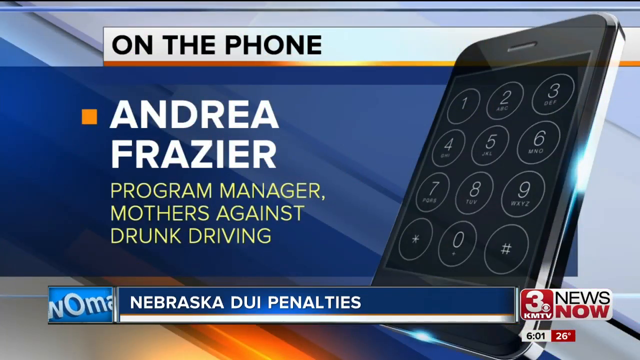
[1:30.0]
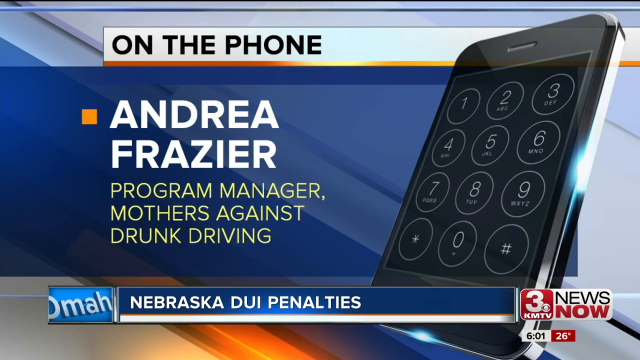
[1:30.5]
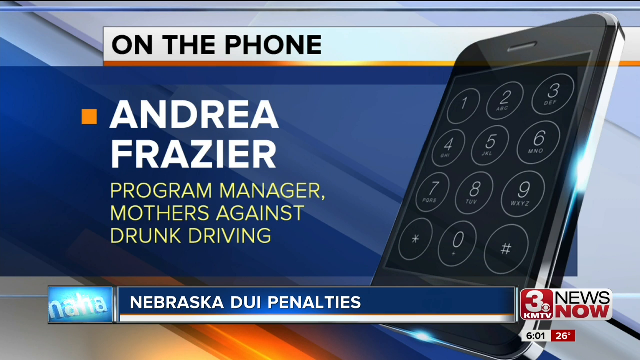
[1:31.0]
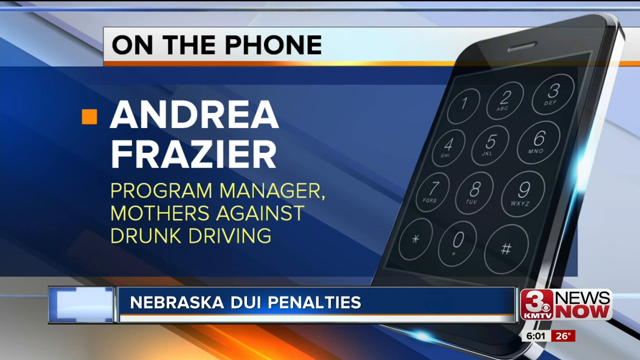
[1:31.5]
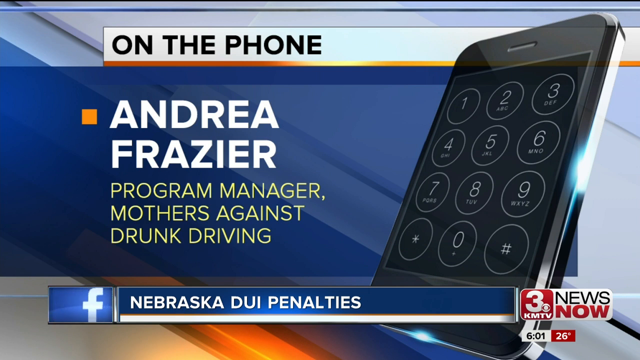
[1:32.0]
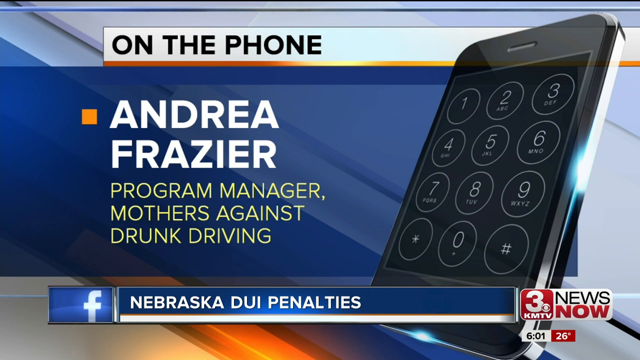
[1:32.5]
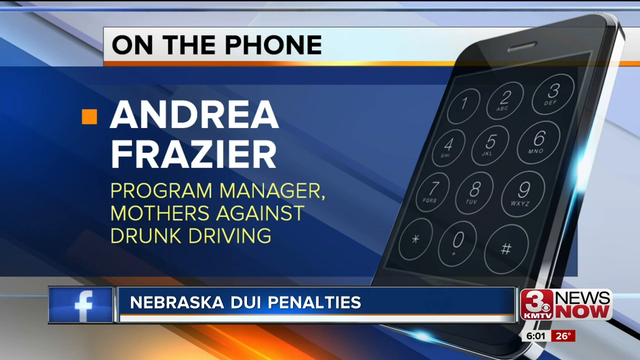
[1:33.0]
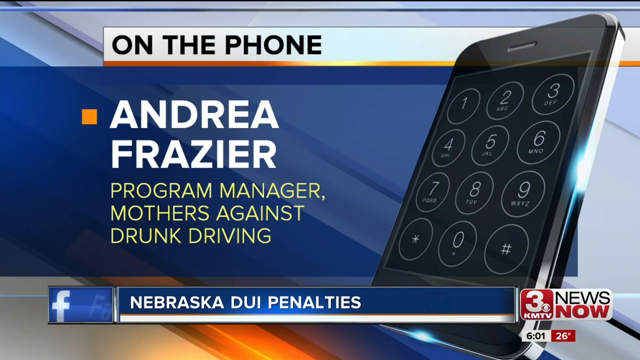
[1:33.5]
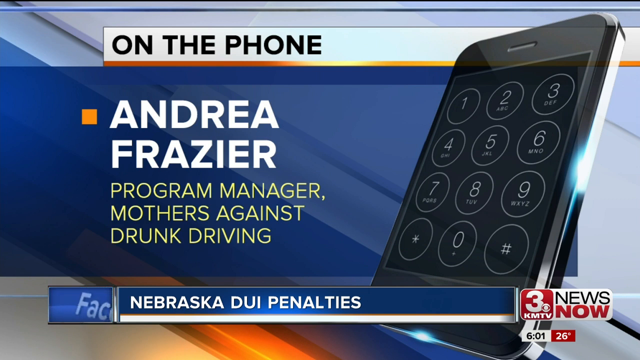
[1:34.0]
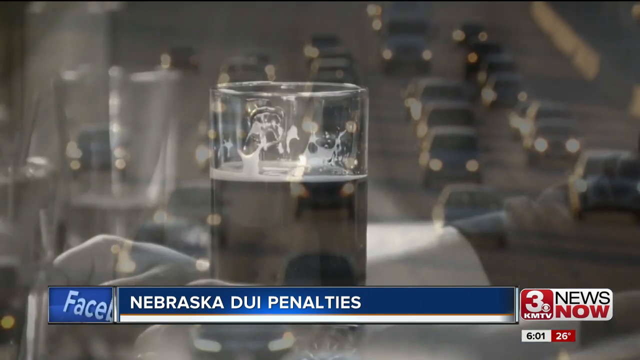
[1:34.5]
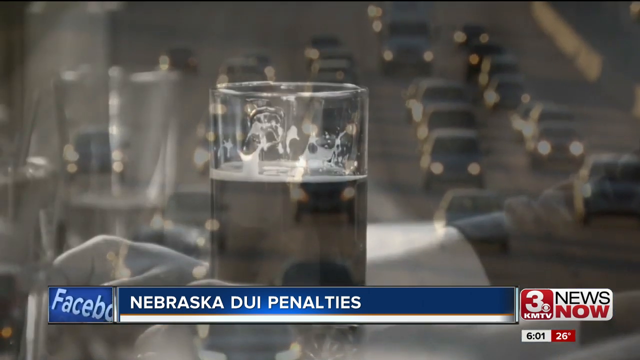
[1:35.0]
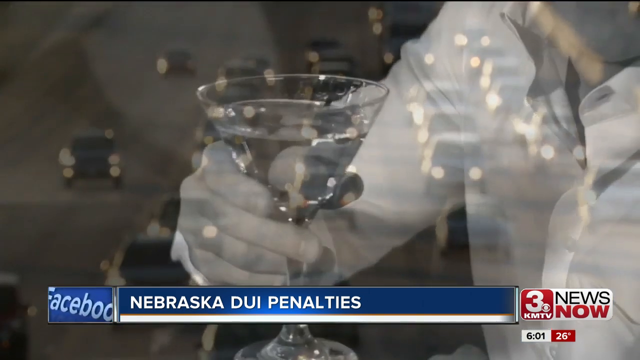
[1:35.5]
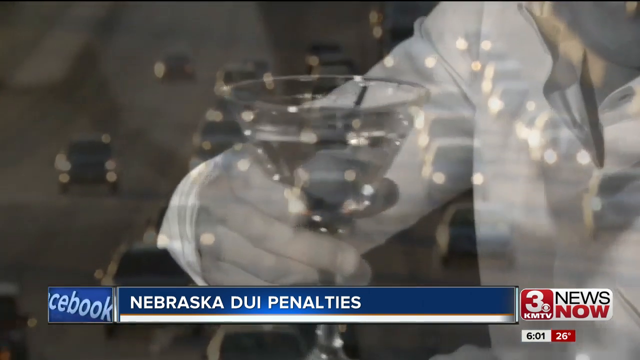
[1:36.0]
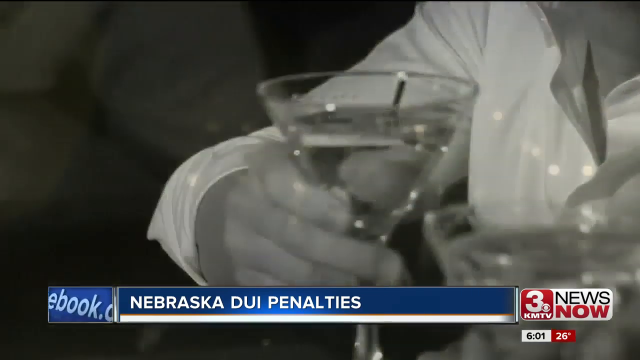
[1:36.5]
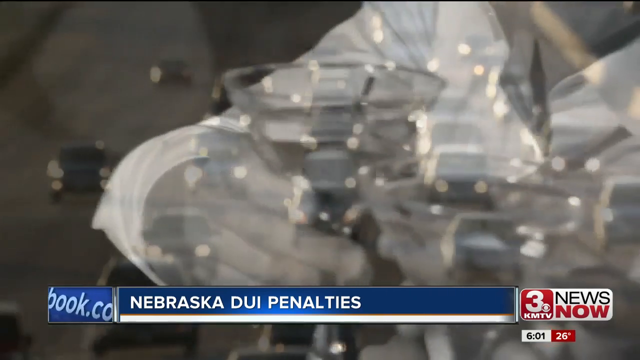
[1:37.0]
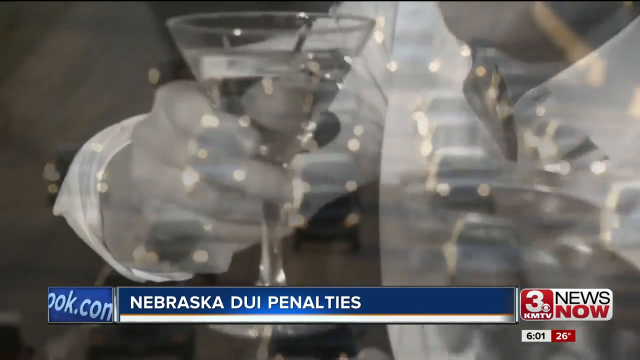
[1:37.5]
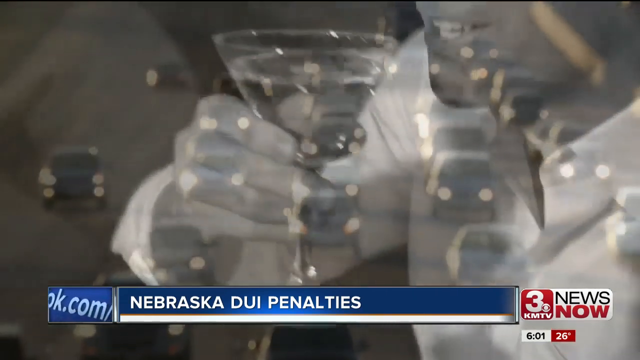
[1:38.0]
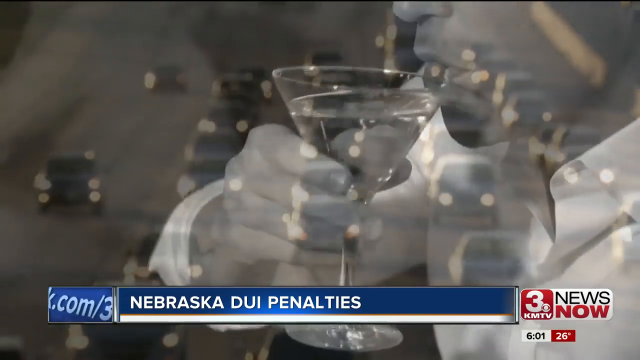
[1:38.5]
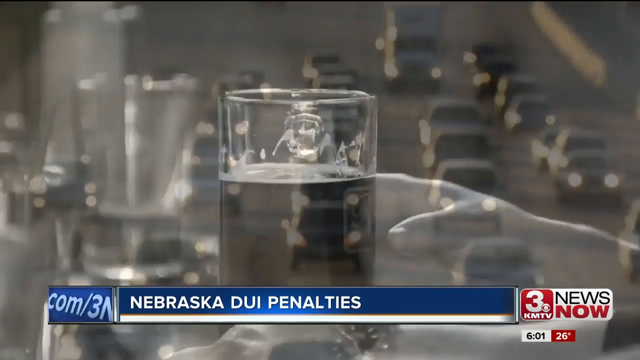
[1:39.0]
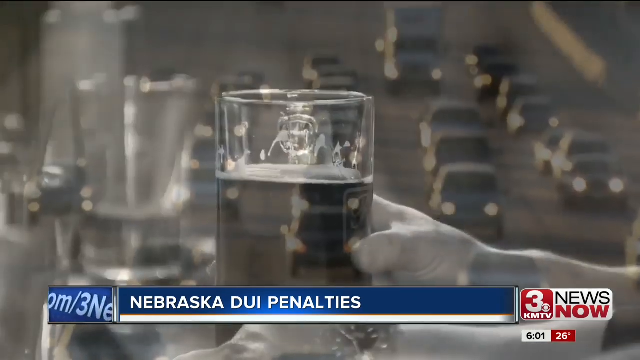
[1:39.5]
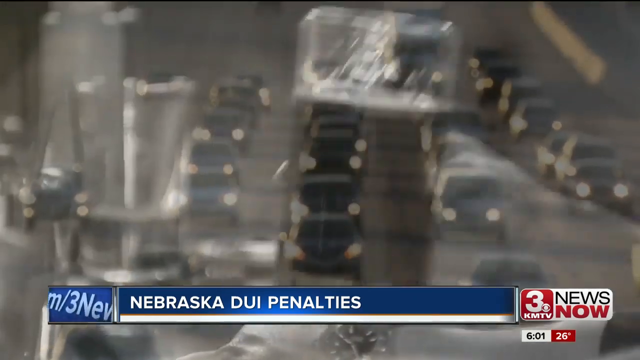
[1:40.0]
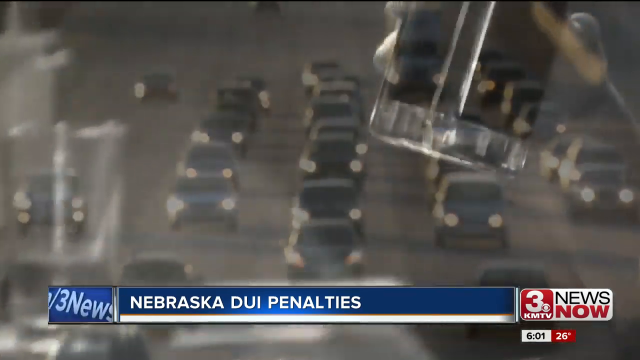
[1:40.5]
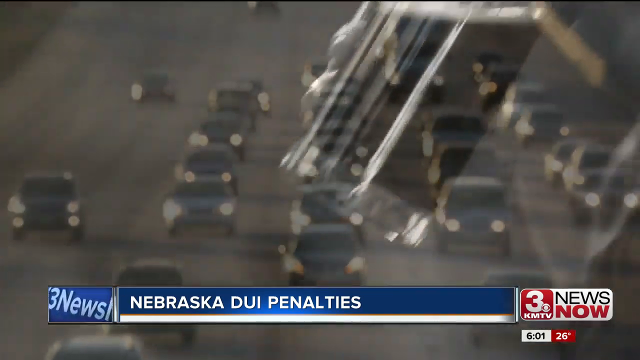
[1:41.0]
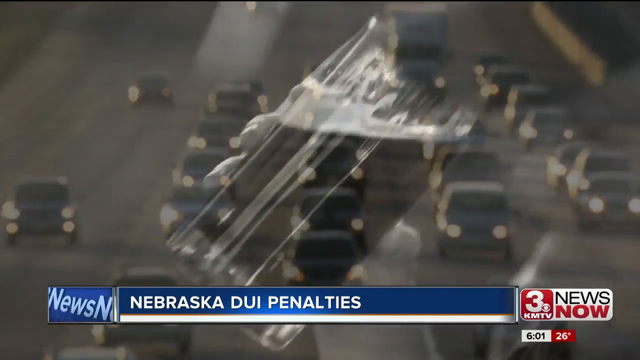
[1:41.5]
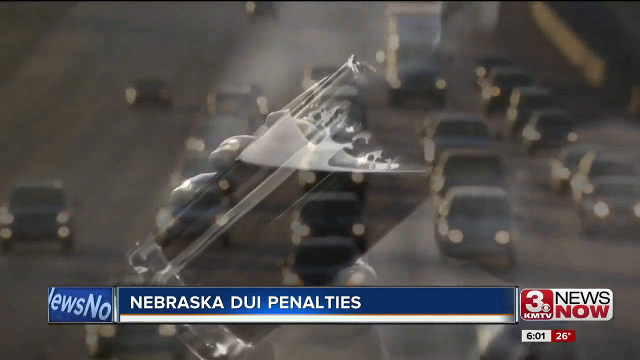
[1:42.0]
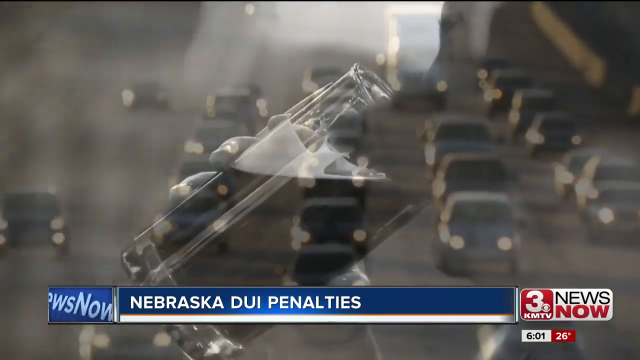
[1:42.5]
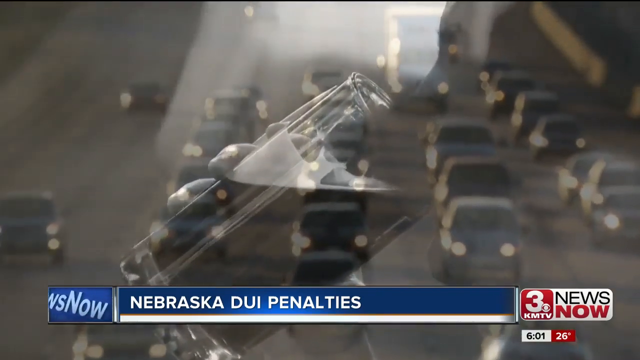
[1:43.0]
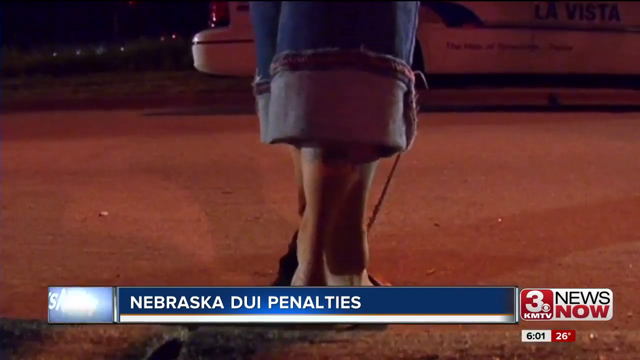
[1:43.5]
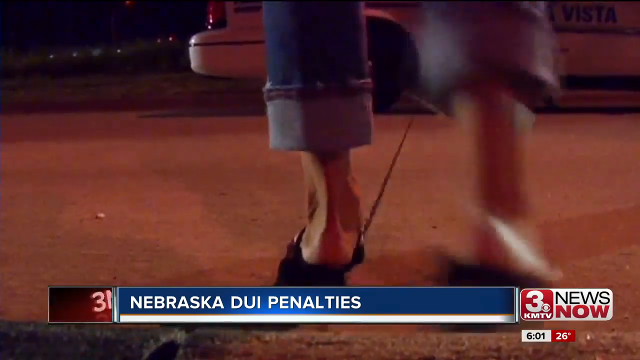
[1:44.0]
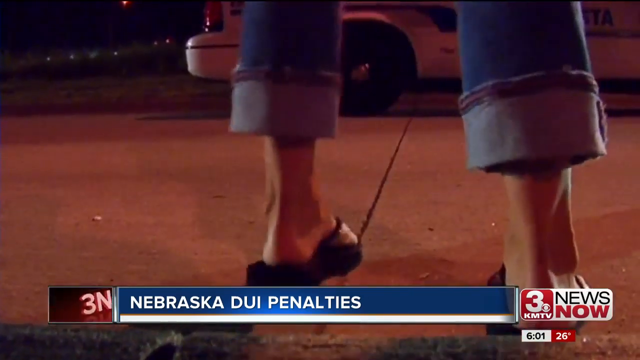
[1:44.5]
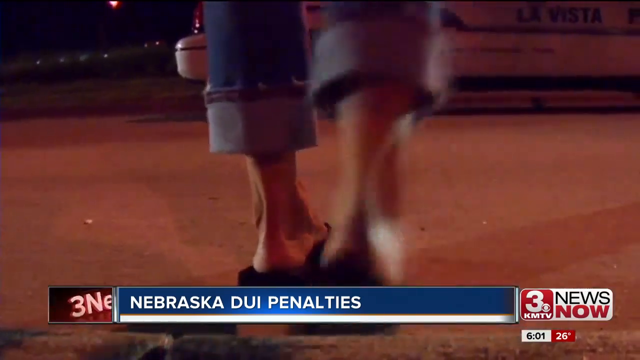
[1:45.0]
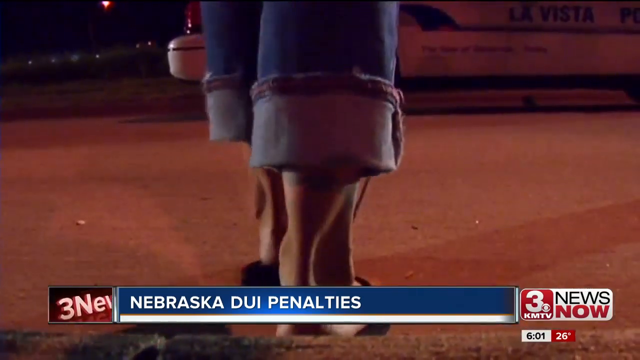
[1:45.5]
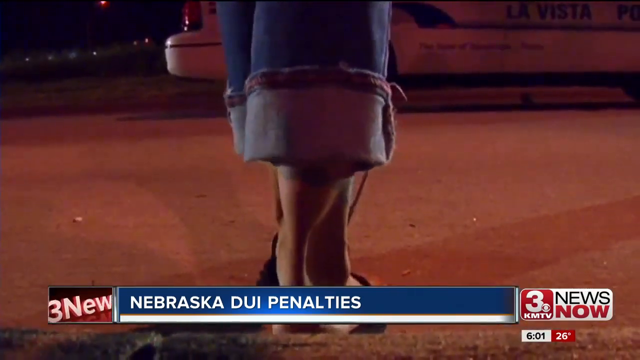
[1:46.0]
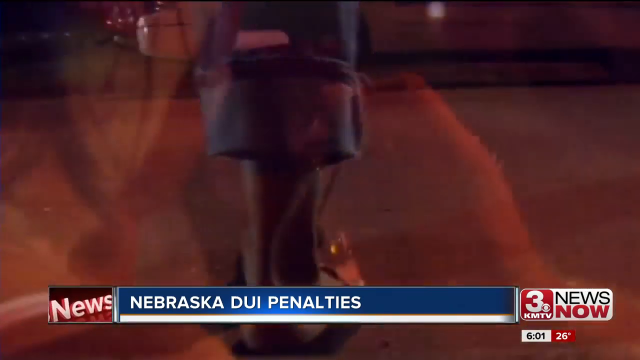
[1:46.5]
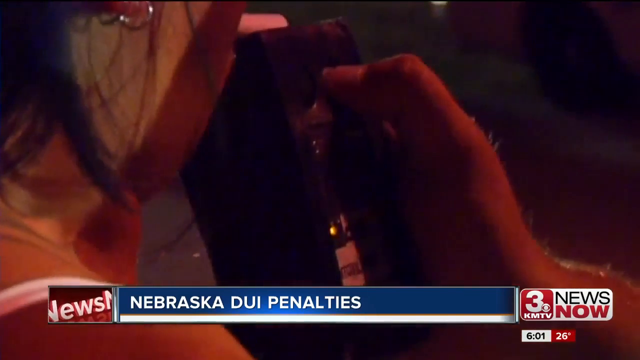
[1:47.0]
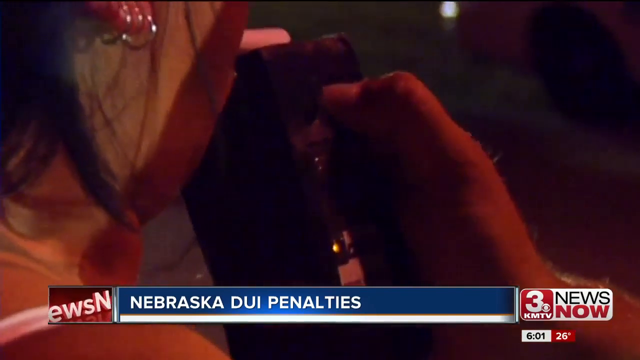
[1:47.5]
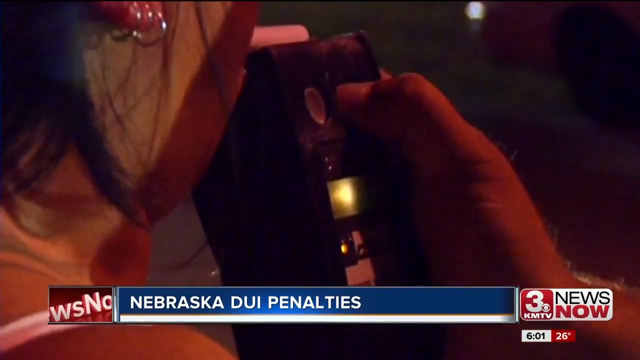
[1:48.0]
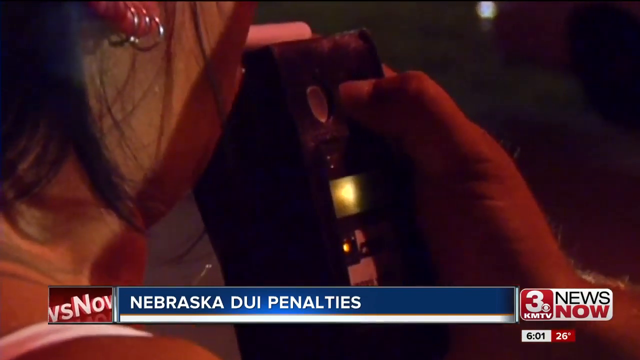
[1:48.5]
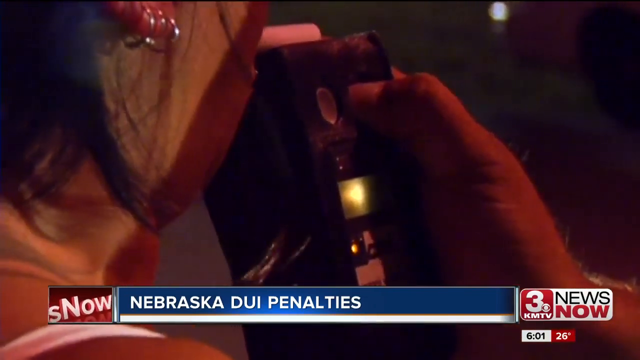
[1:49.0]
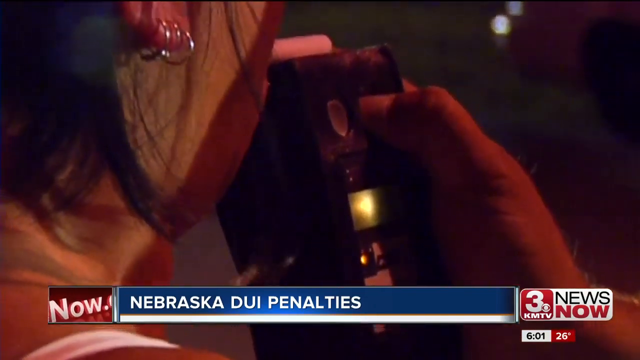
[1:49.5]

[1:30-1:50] During the conversation with Andrea Frazier of Mothers Against Drink Driving, sort of stock images of a bar are shown. Someone sits at a table next to a partially drunk beer with froth running down the glass, and a road with traffic is visible in the background. Next, a man clinks cocktail glasses with a friend, with the road still visible; the cocktail appears to have an olive in it. A person then takes a big swig of beer. Police make someone walk in a straight line as a check for drunkenness, and then a woman blows into a breathalyzer machine. She has brown hair, three earrings in her right ear, and wears a white vest.